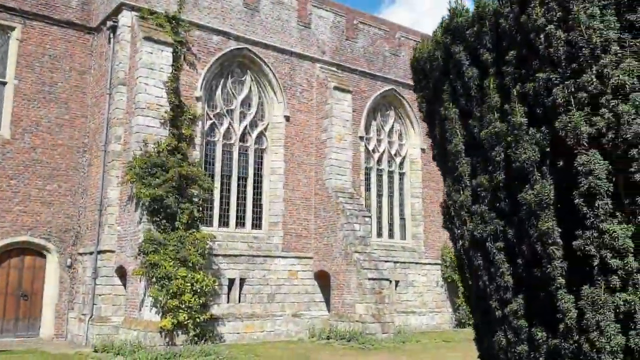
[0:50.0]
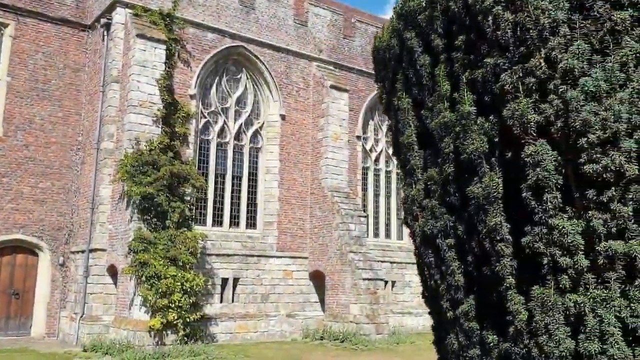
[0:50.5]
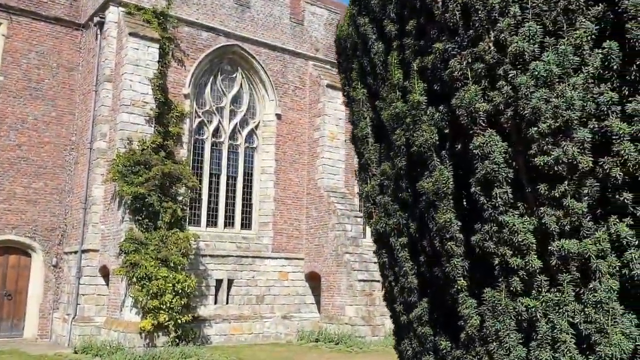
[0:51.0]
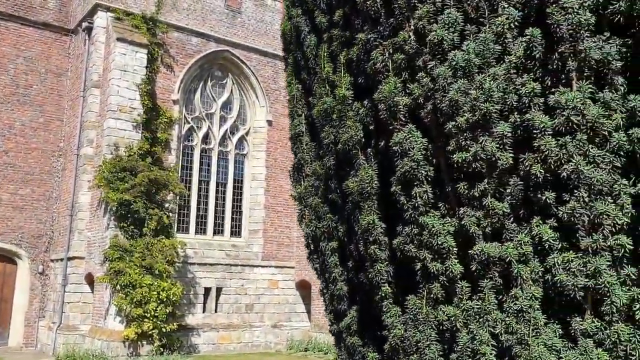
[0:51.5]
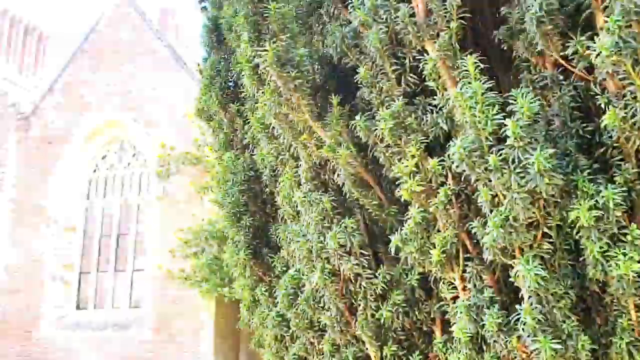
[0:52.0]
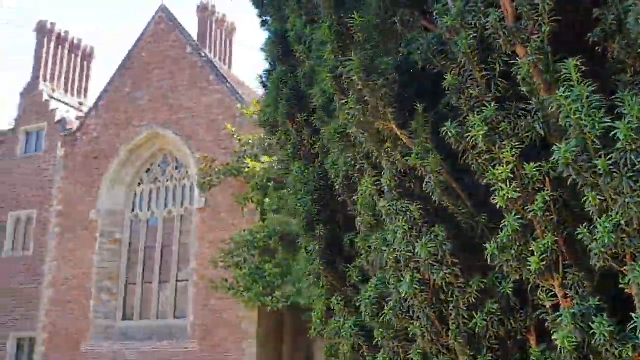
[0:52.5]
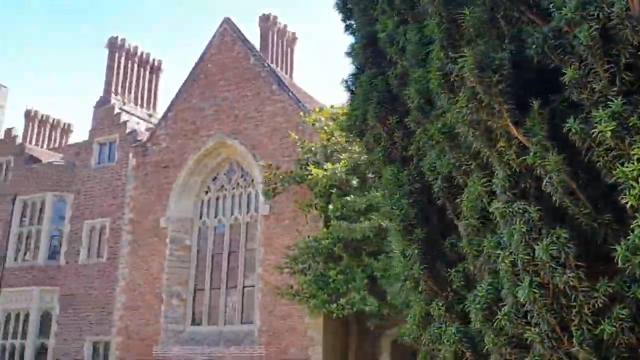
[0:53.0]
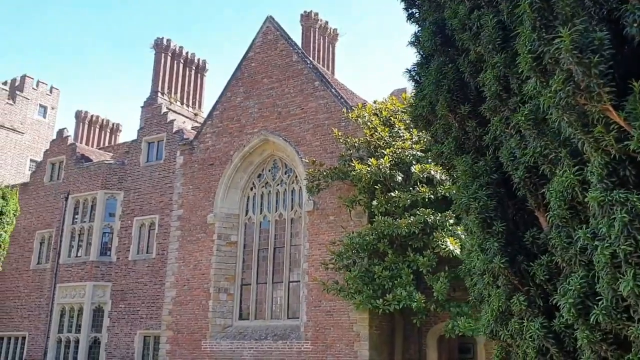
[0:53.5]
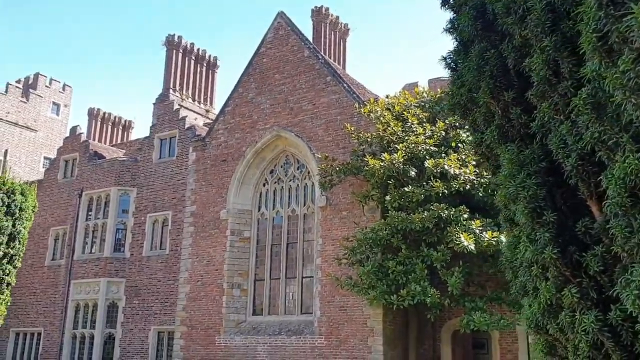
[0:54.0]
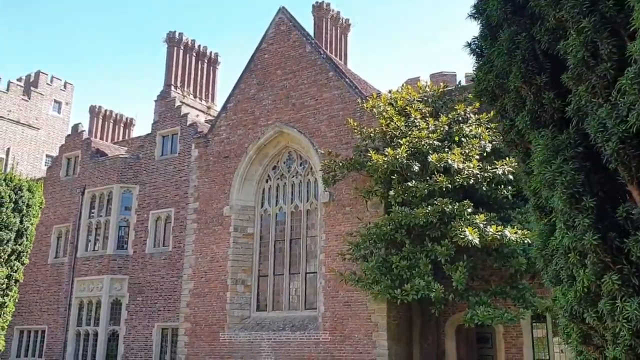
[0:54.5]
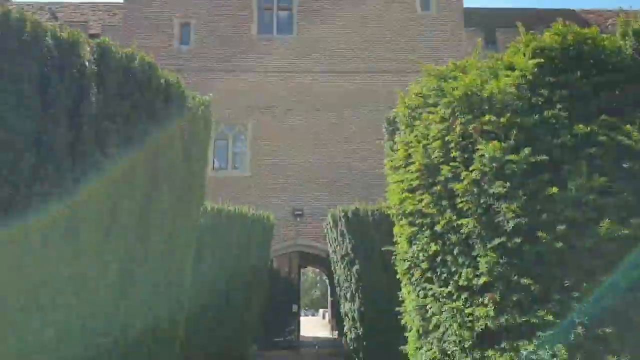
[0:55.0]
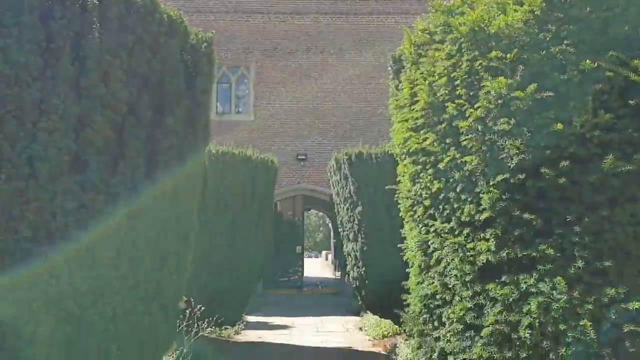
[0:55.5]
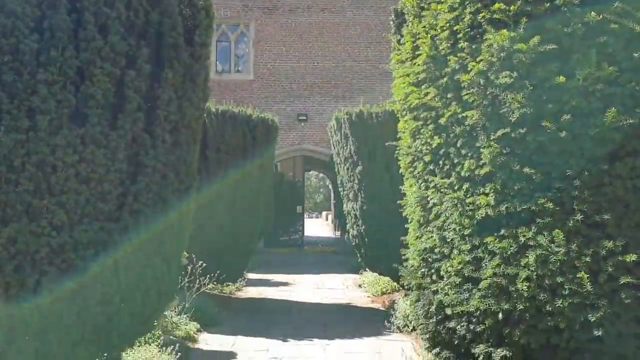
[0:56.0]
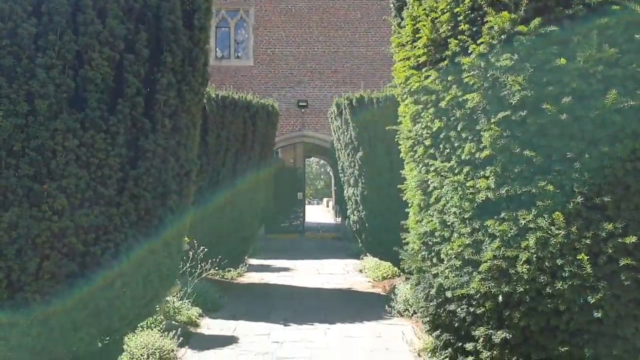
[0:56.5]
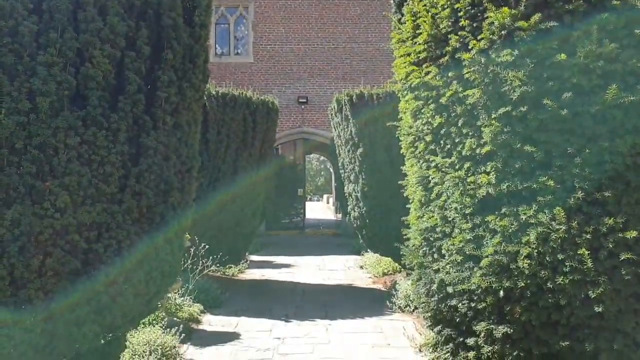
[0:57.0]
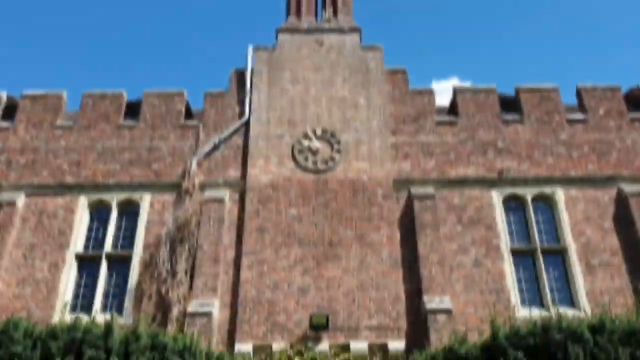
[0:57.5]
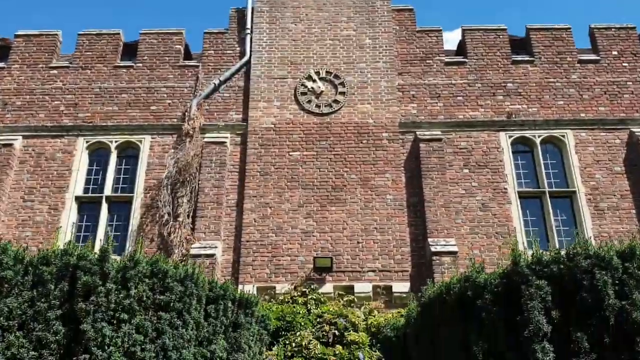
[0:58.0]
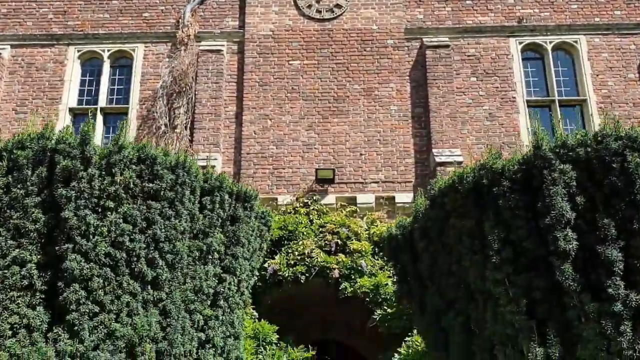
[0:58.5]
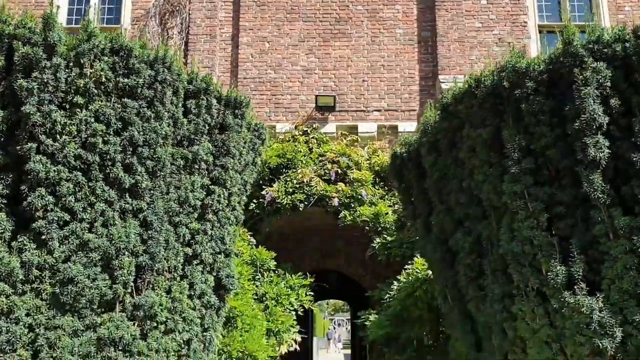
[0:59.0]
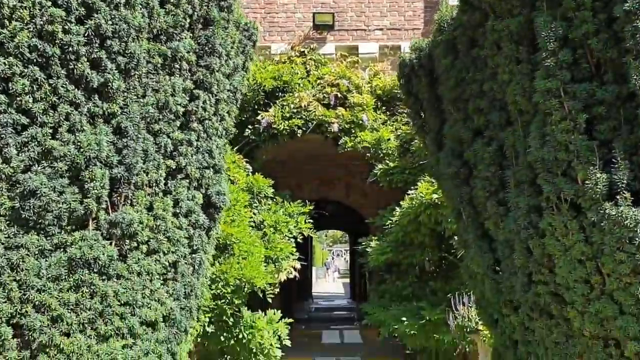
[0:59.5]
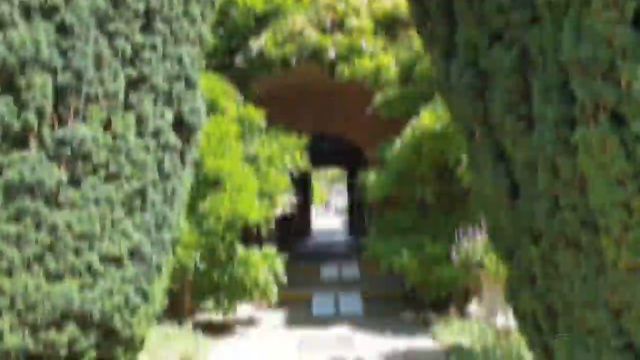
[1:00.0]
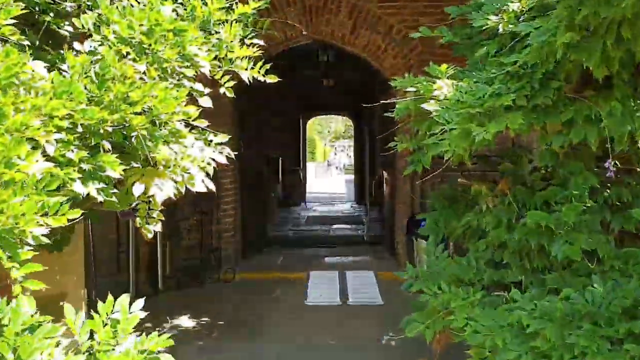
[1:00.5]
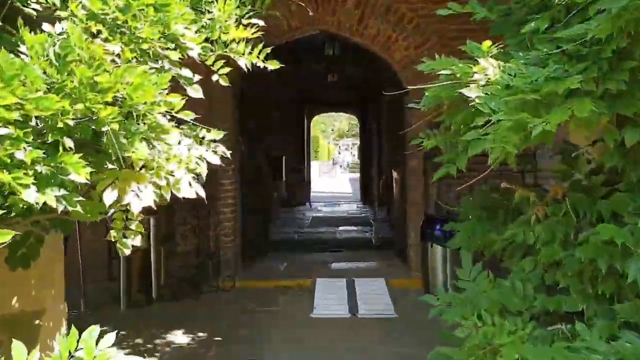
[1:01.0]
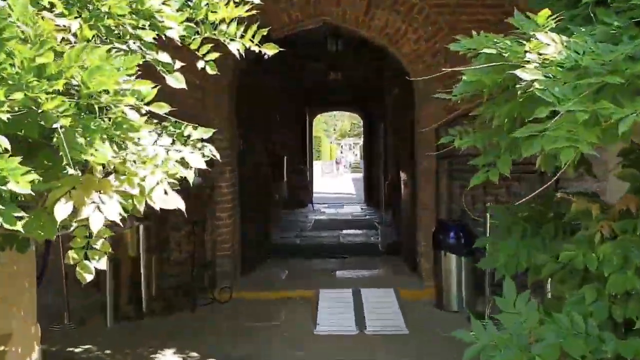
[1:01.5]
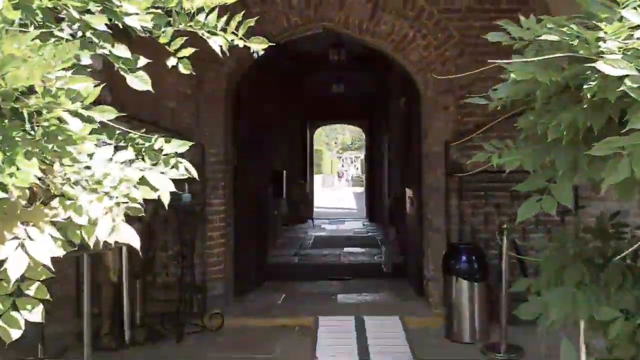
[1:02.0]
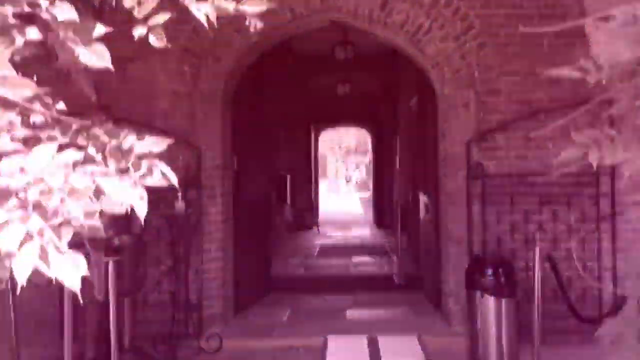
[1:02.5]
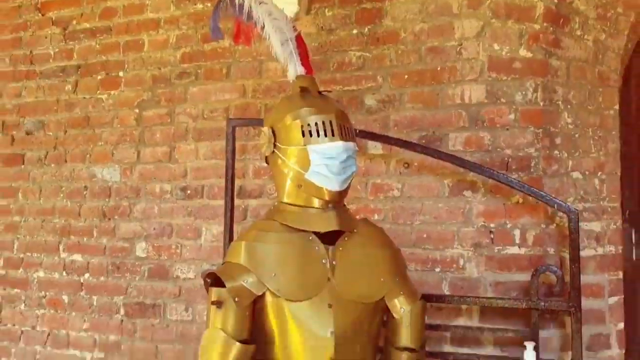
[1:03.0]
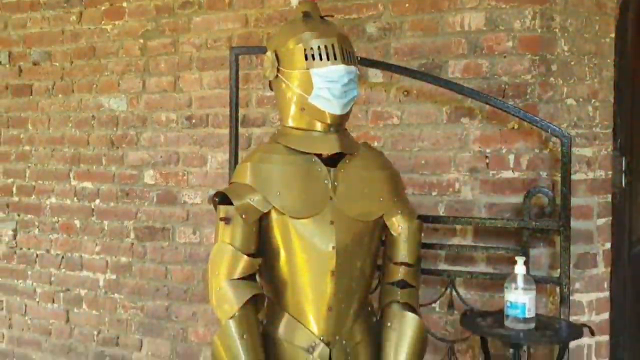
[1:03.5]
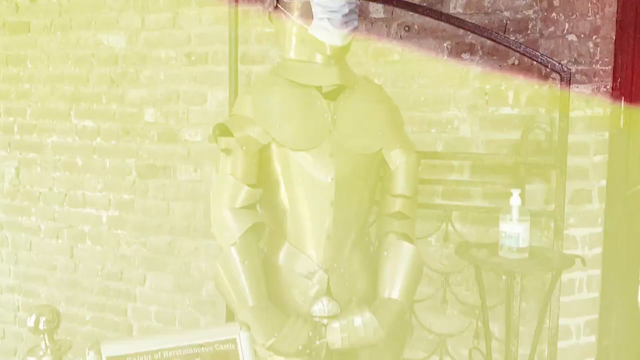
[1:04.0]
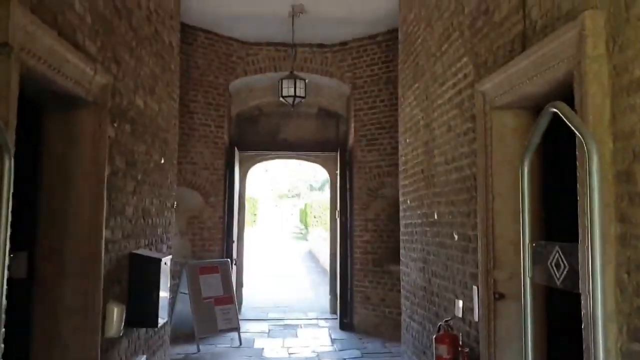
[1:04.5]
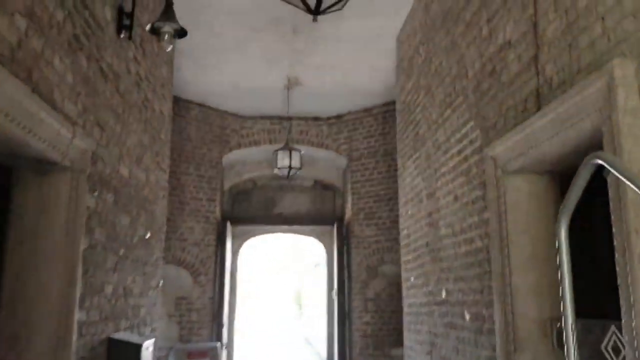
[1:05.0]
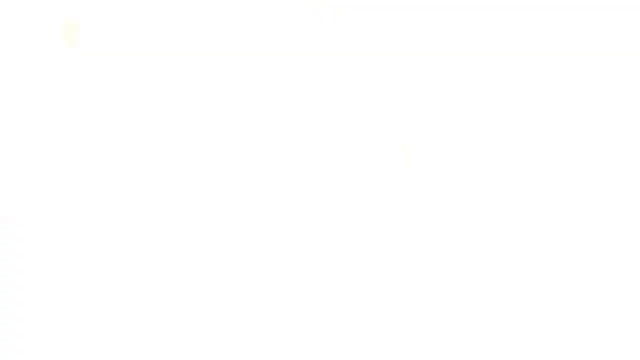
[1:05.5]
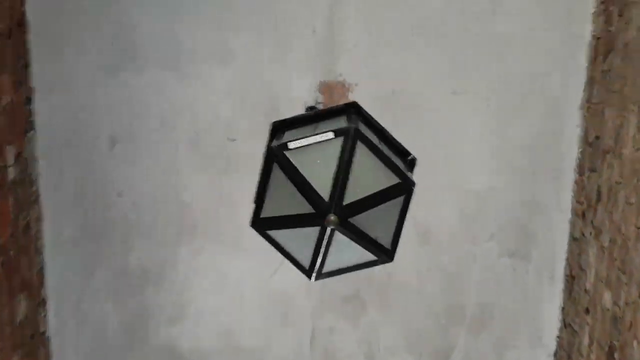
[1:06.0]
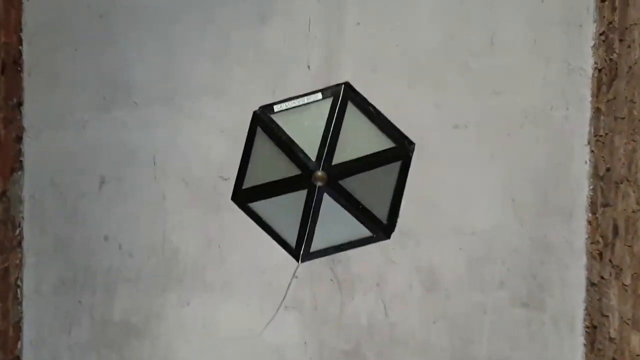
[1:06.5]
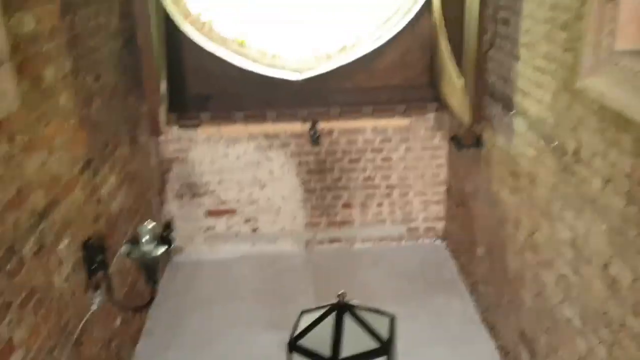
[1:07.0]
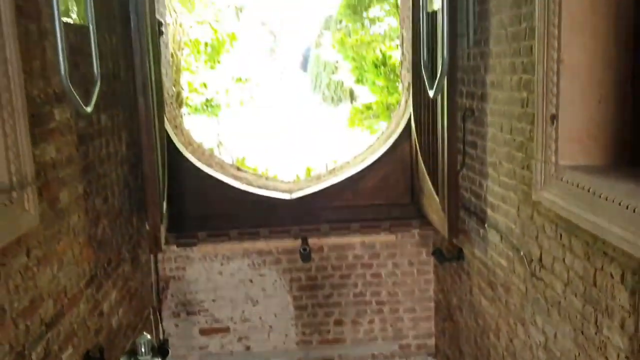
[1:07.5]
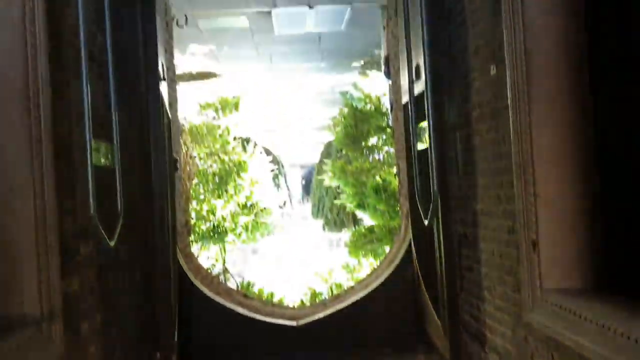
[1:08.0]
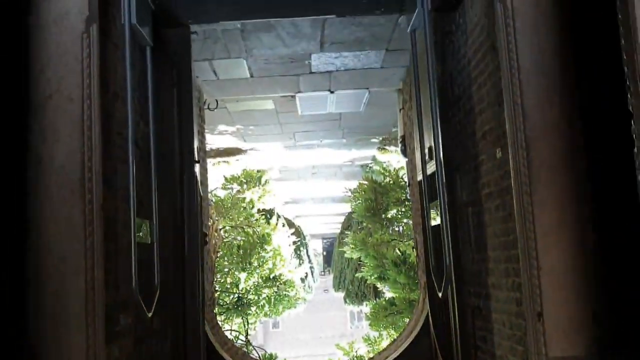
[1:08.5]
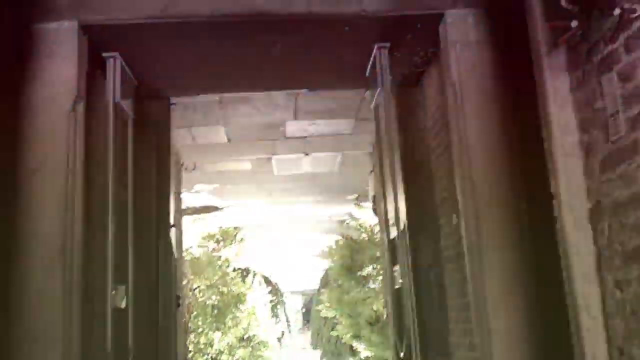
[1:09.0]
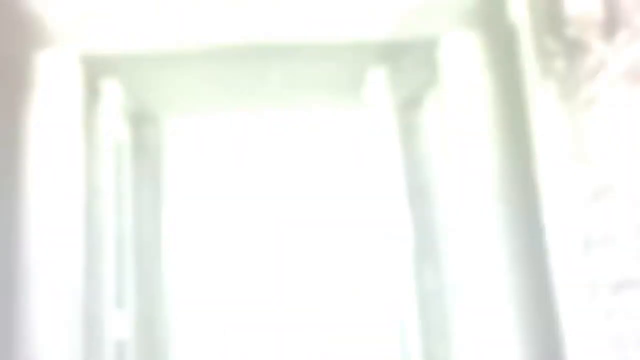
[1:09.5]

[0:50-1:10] What looks like the same castle appears with no people, going further inside the grounds. A clock is visible, and the camera passes through an archway at odd angles. A suit of armour is wearing a Covid mask. There are no subtitles. A series of shots shows the castle's windows and features such as light fittings; apart from the suit of armour, no human figures appear.